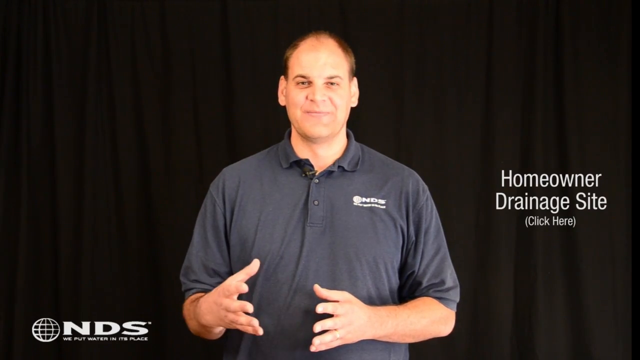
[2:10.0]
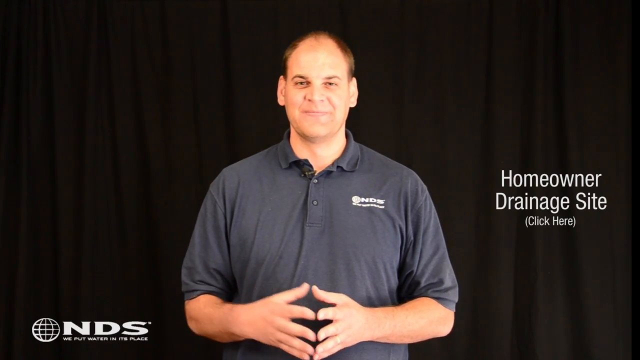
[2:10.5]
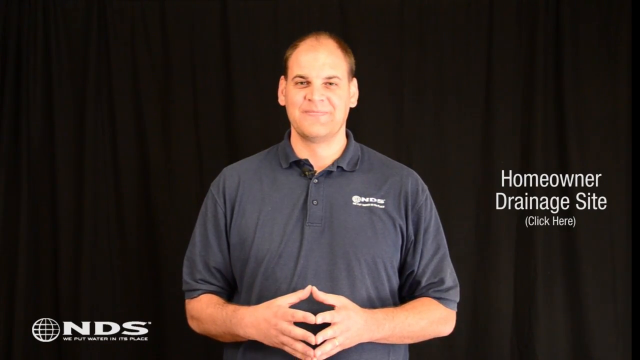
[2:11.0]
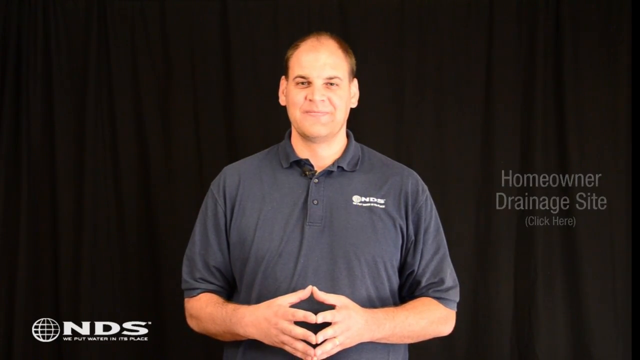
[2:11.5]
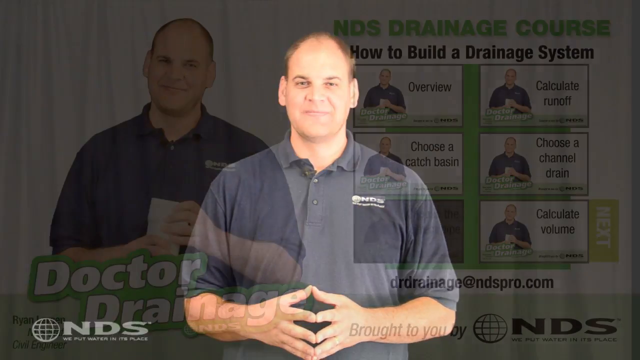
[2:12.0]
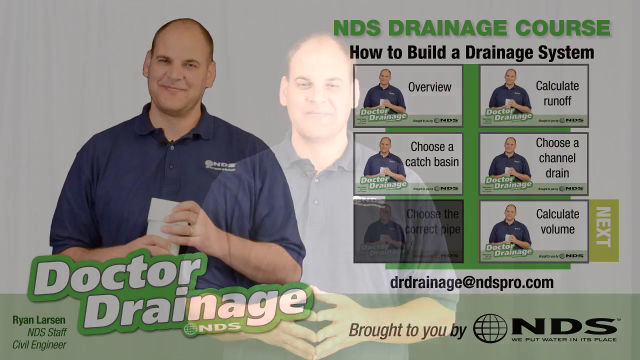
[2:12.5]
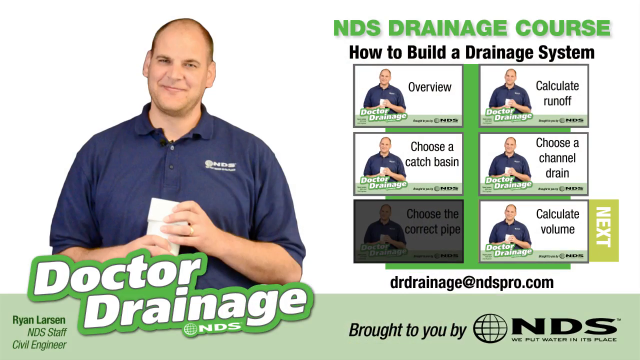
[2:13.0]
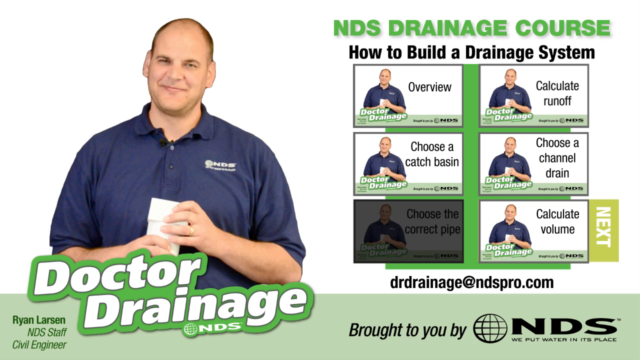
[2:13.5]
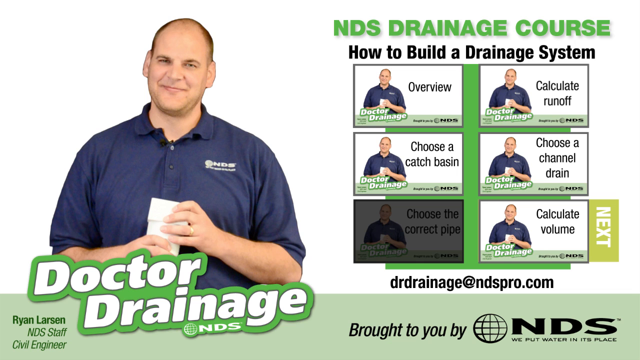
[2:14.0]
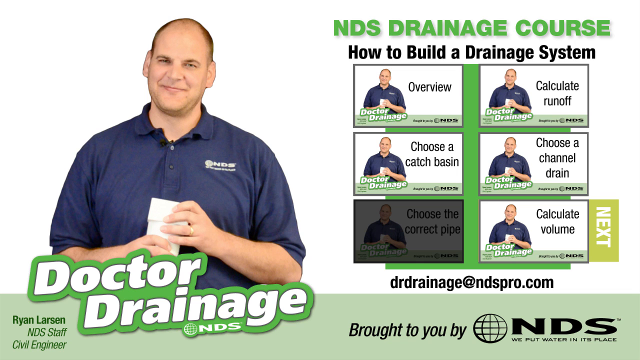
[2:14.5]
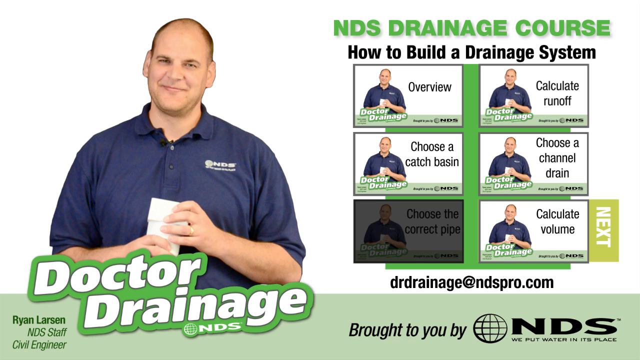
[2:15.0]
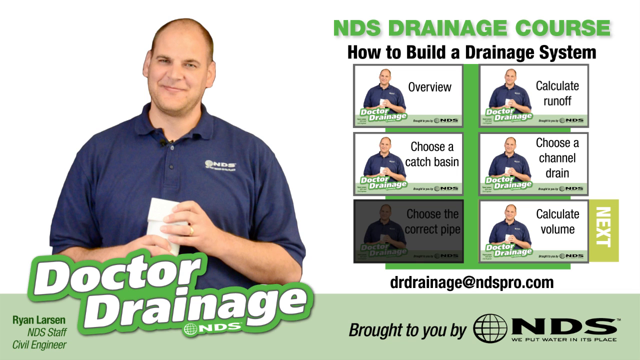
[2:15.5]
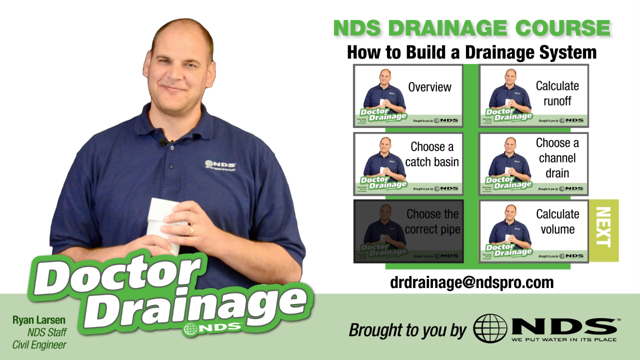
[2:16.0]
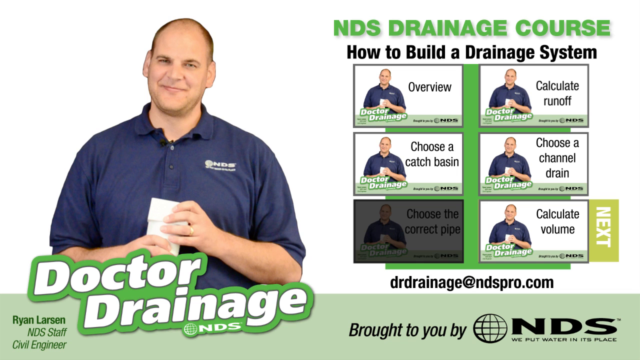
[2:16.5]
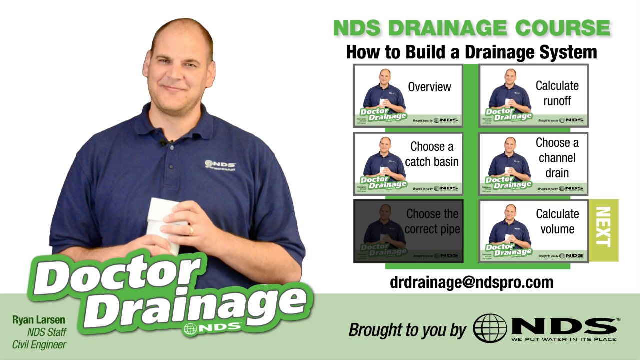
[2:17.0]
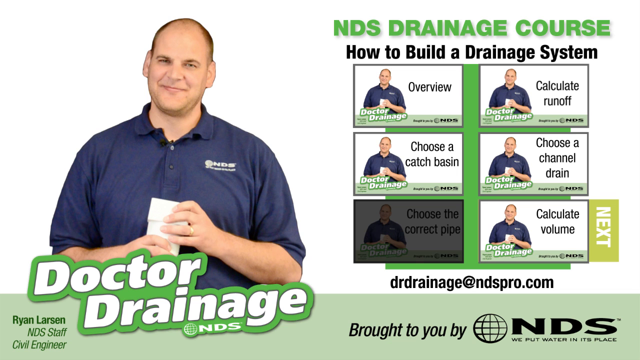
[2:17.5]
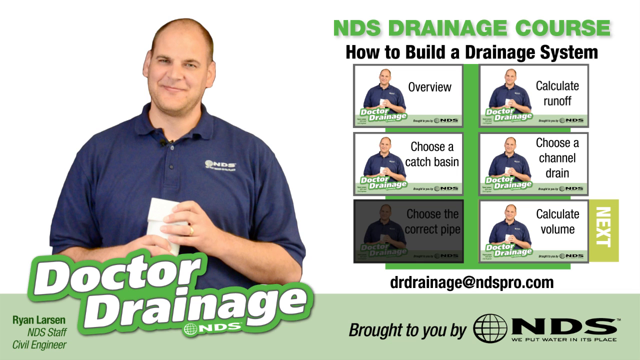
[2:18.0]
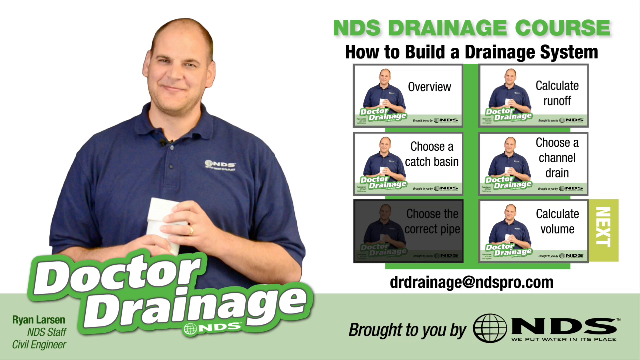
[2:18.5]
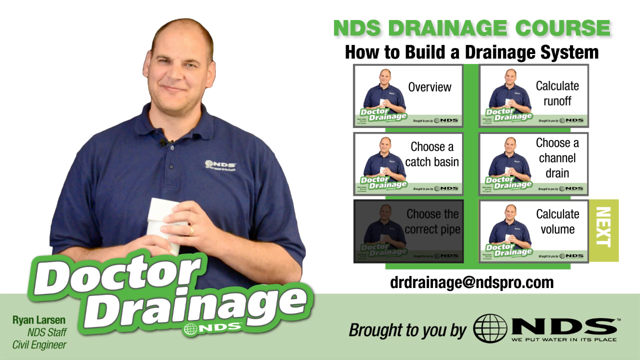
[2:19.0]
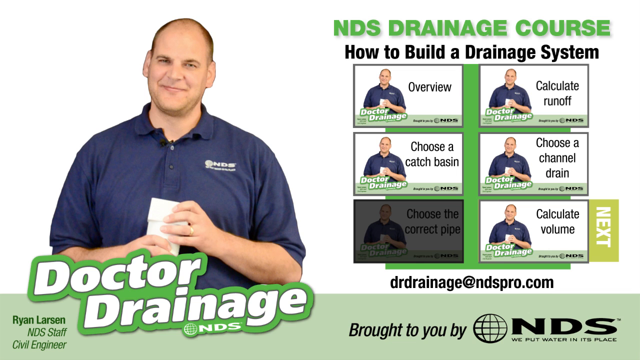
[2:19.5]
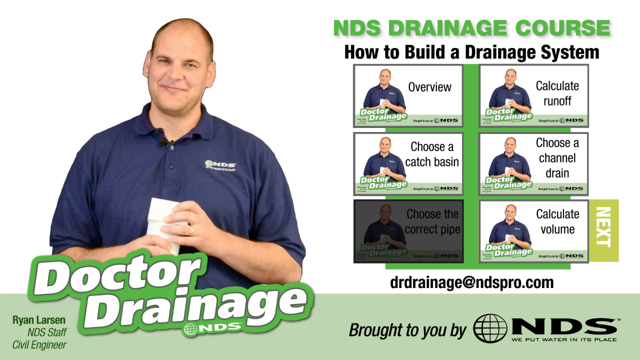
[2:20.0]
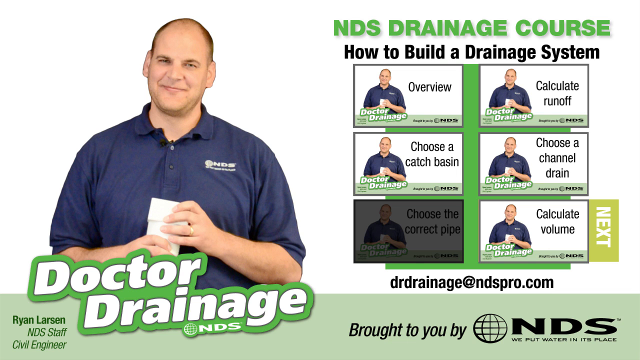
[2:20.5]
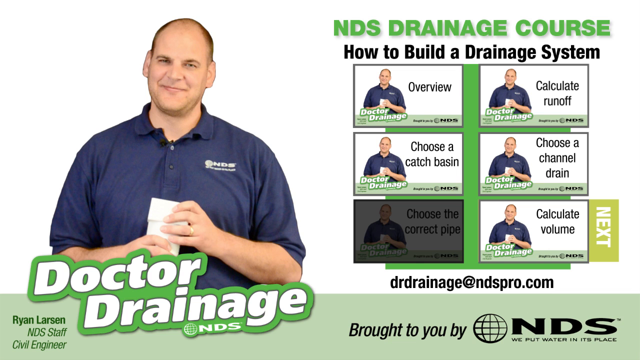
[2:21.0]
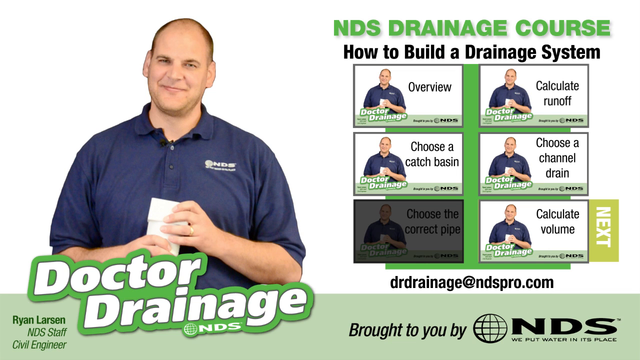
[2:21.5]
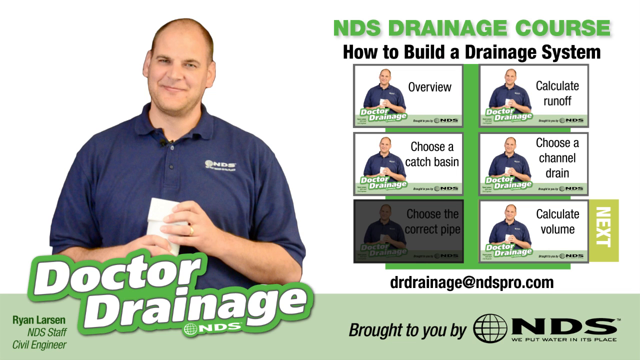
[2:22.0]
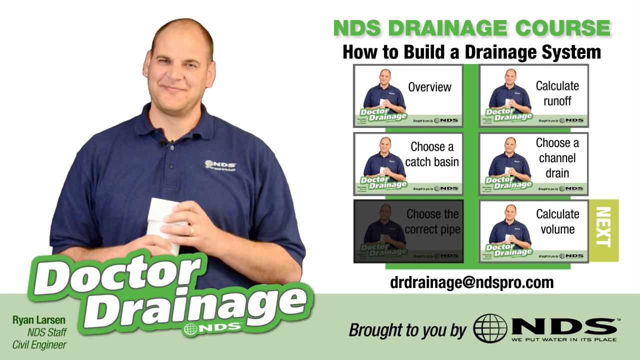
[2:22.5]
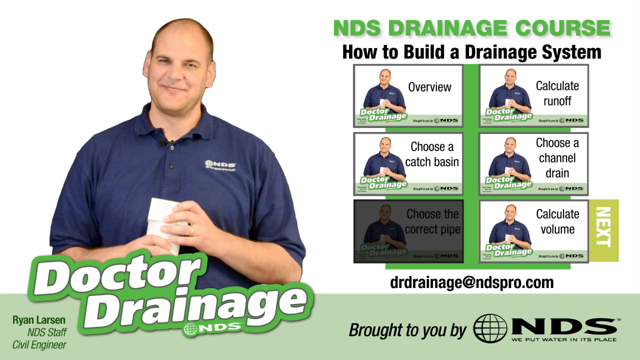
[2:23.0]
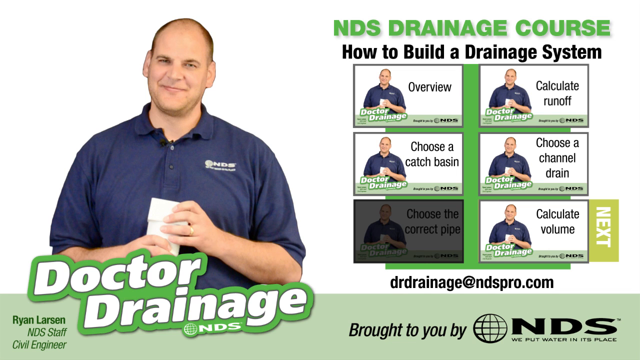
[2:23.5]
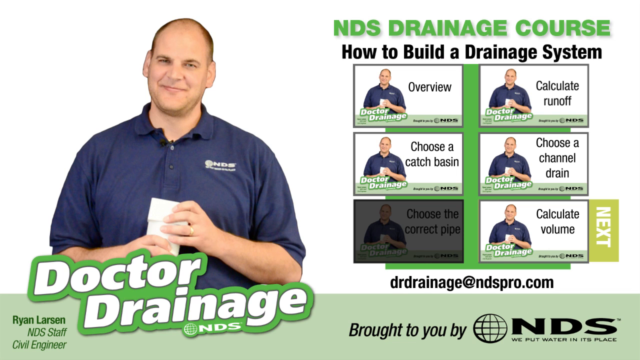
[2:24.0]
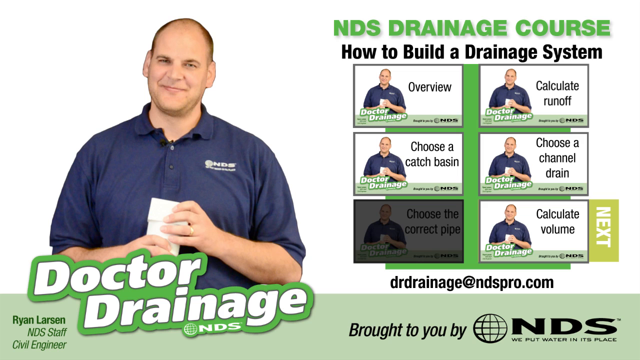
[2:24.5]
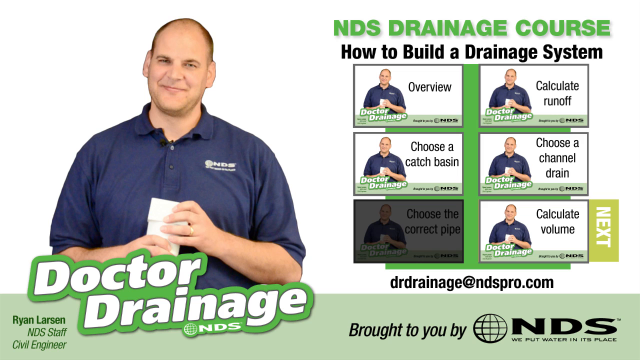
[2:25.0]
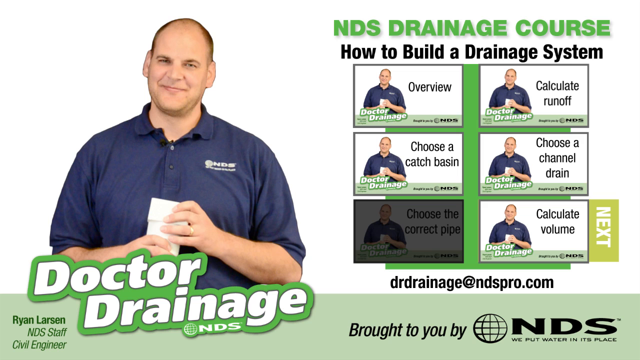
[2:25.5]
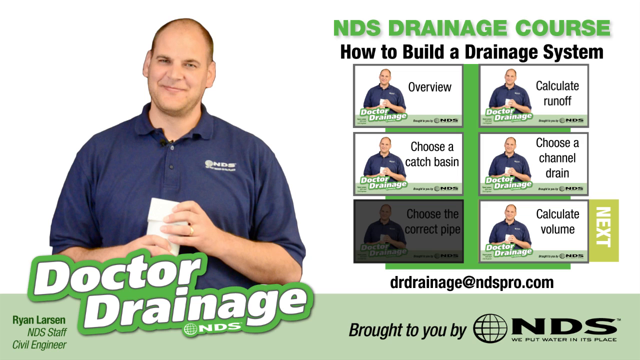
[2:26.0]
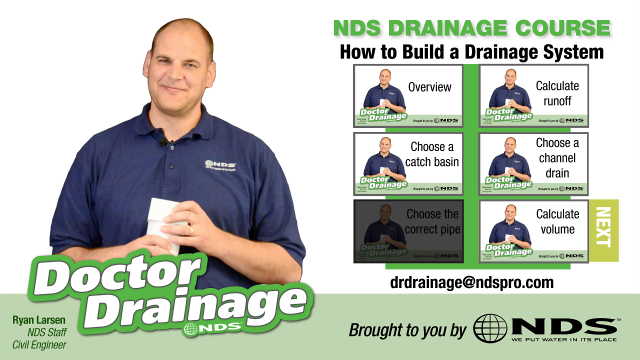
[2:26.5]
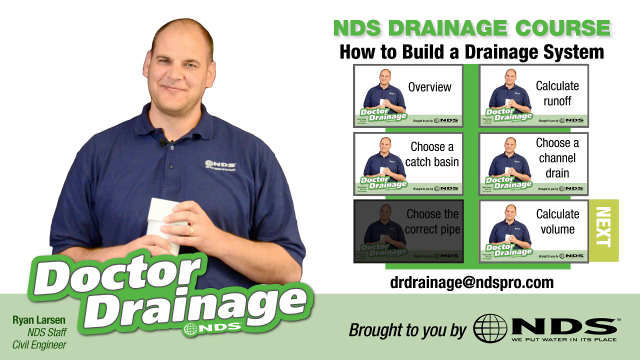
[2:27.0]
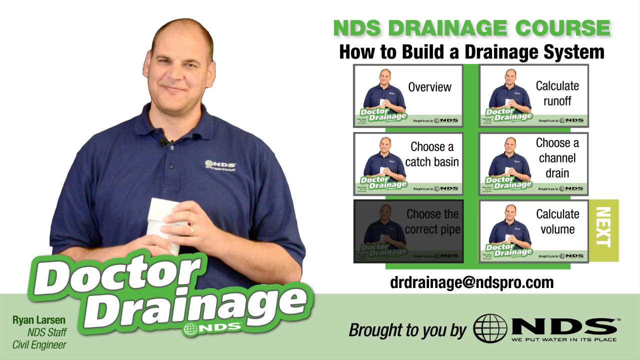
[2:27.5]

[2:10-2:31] The man finishes speaking in front of the black backdrop; his hands come together and become still, and he looks at the camera with a closed-mouth smile. The video goes back to the original still image of what may be the landing page, with the still image of the man on the left and, underneath, large white text outlined in green reading "Dr. Drainage". On the right side, as before, it says "NDS Drainage Course, How to Build a Drainage System", but instead of bullet points there are six rectangles in two stacks of three. Each contains the photograph of the man holding the white PVC pipe with different words next to it: "Overview", "Choose a Catch Basin", "Calculate Runoff", "Choose a Channel Drain" and "Calculate Volume". The bottom left one is grayed out, evidently marking the current page, and through the dark color it says "Choose the Correct Pipe". Underneath this graphic, in regular type, it says "drdrainage at ndspro.com". At the bottom is "NDS Drainage brought to you by" with what seems to be a drawing of a world with latitude and longitude lines and "NDS". Then the video stops.